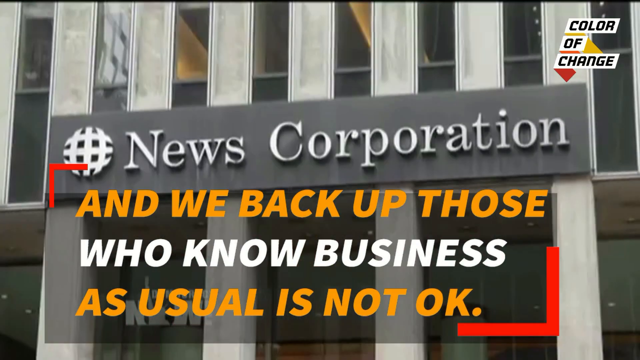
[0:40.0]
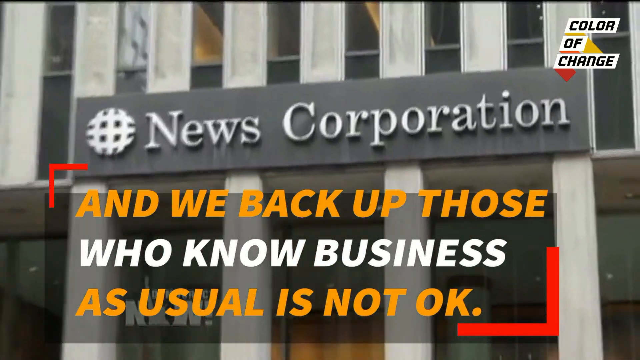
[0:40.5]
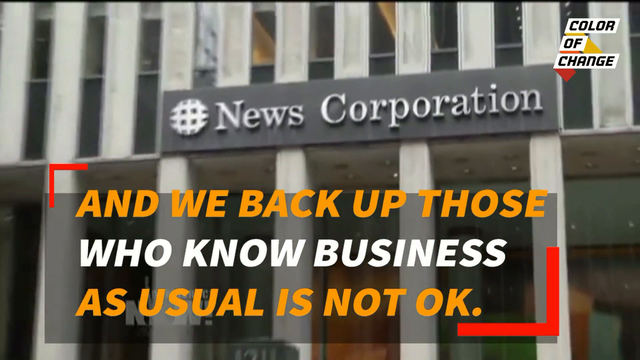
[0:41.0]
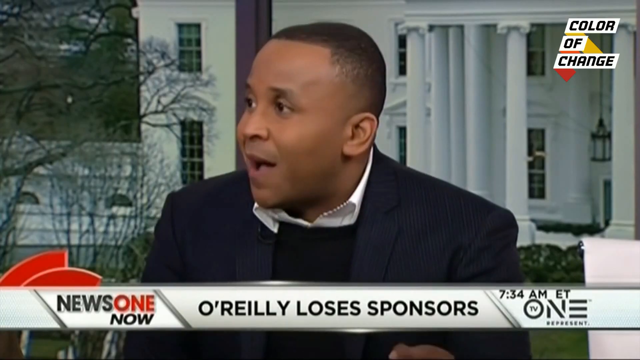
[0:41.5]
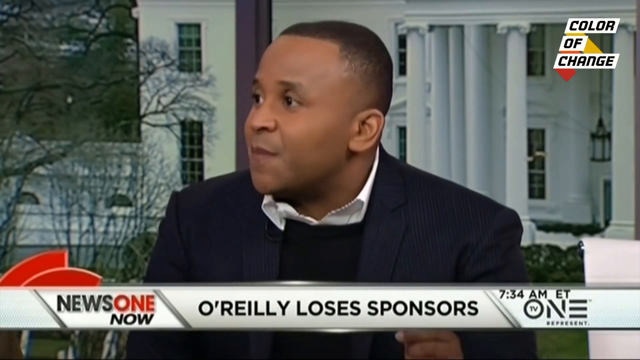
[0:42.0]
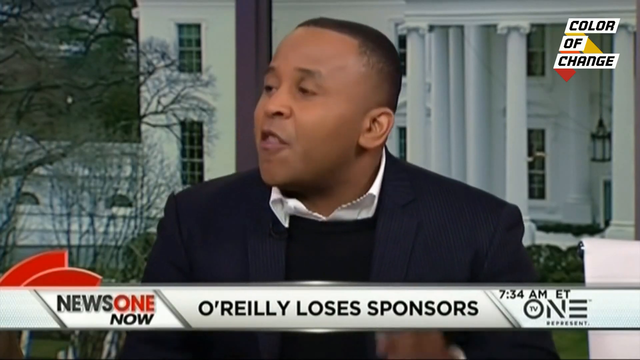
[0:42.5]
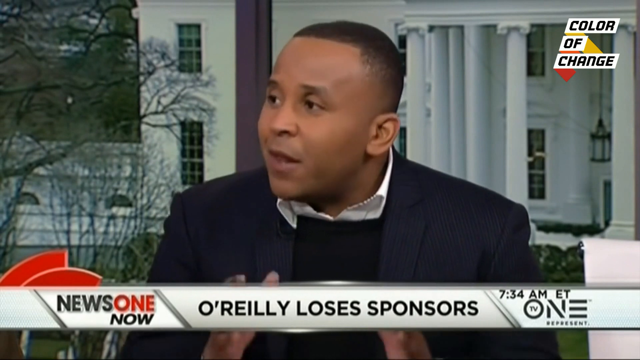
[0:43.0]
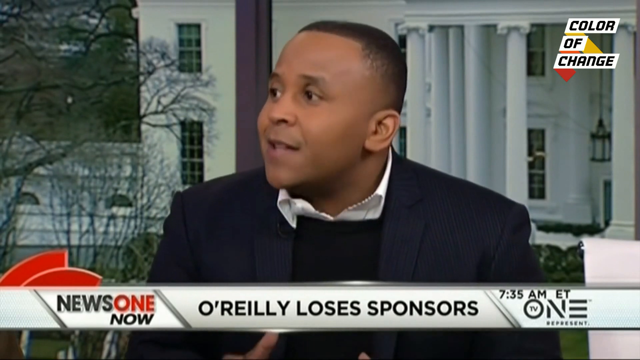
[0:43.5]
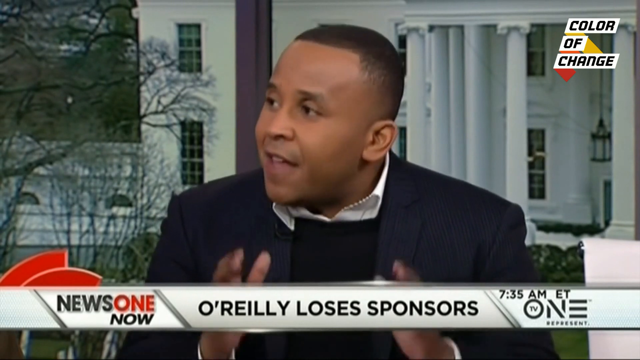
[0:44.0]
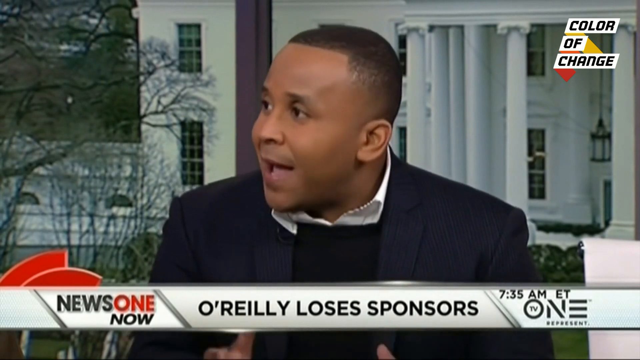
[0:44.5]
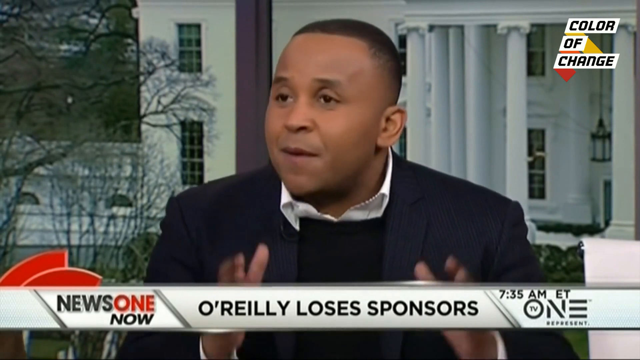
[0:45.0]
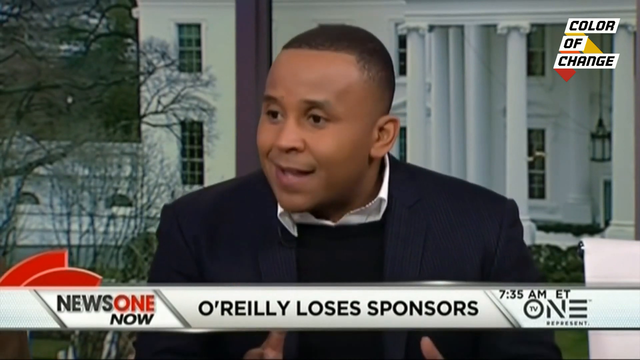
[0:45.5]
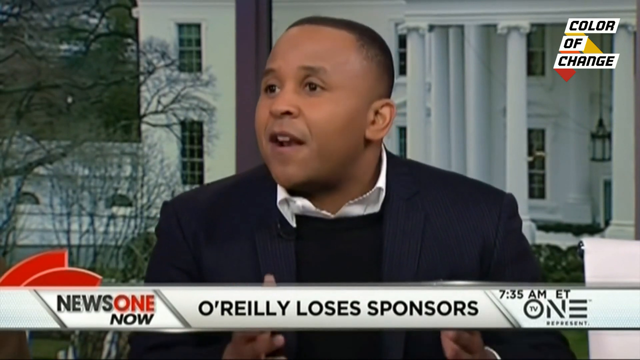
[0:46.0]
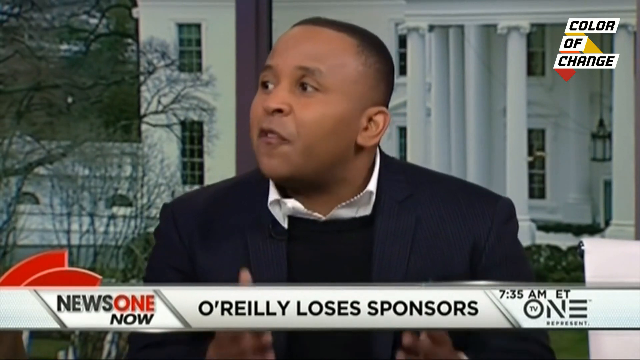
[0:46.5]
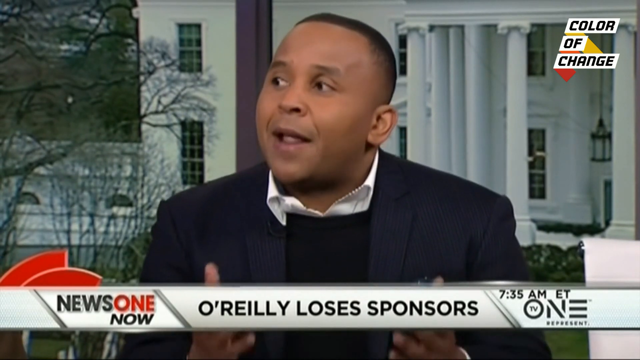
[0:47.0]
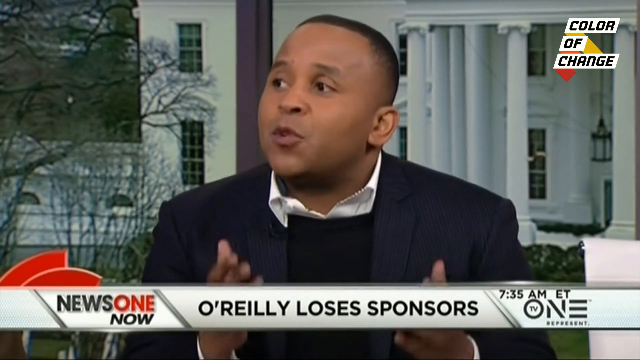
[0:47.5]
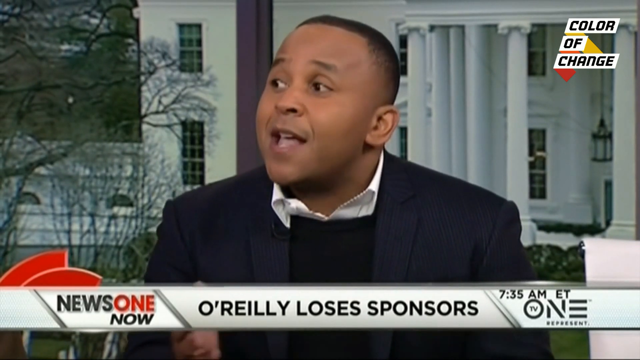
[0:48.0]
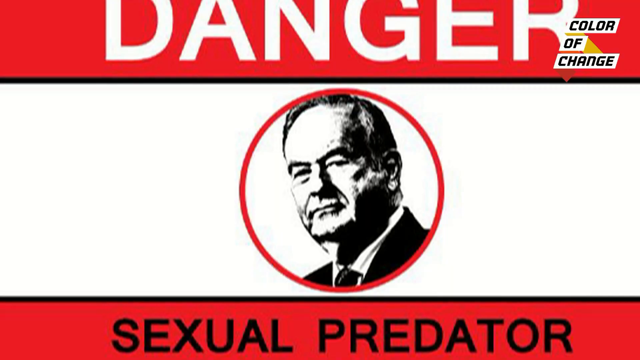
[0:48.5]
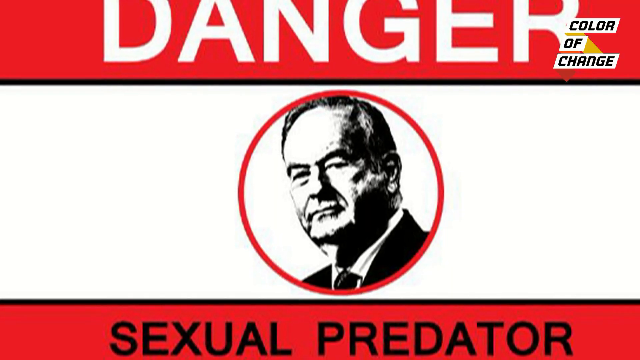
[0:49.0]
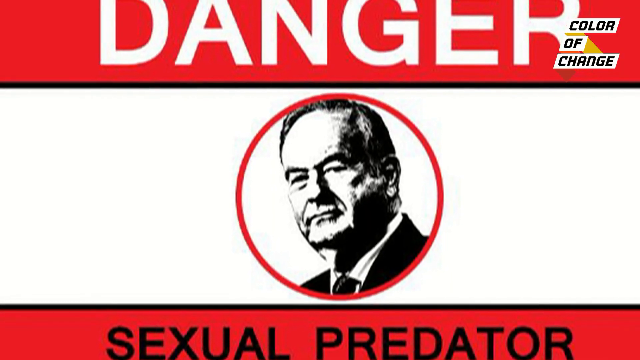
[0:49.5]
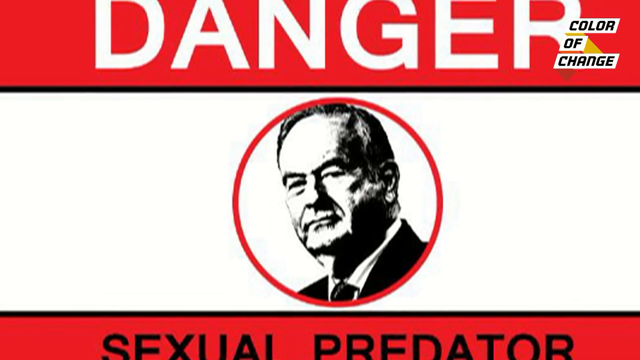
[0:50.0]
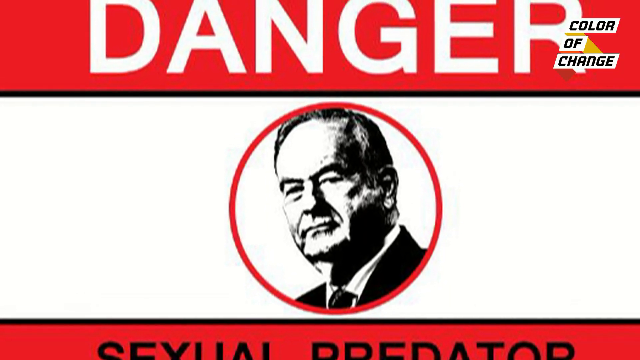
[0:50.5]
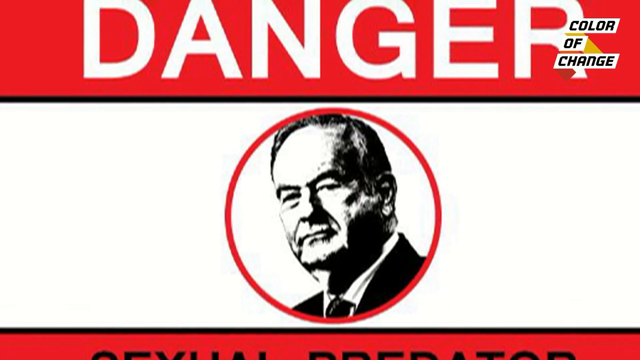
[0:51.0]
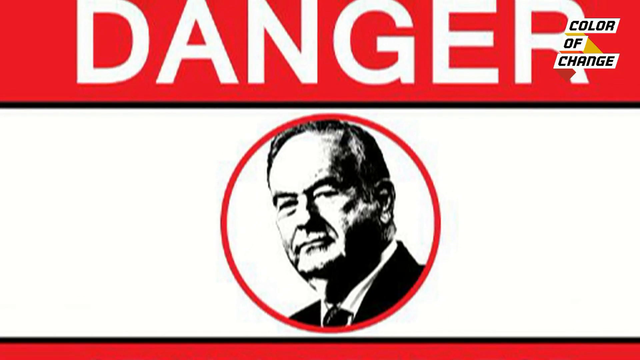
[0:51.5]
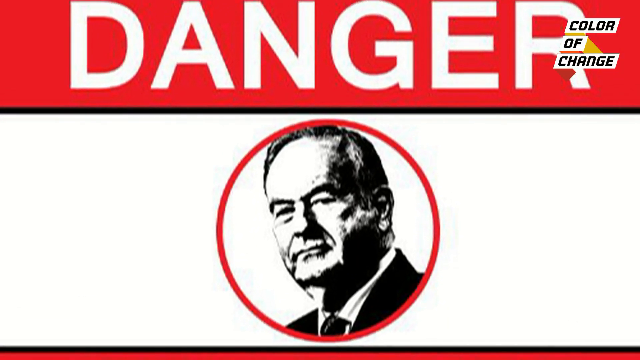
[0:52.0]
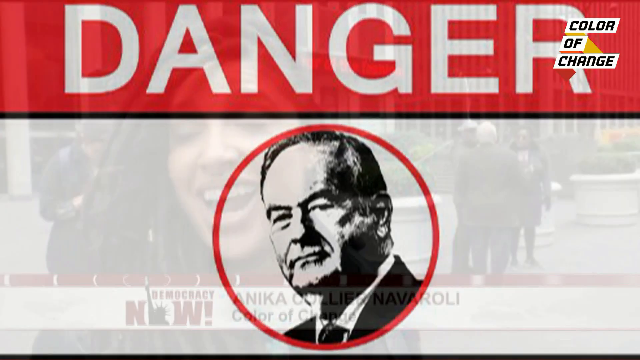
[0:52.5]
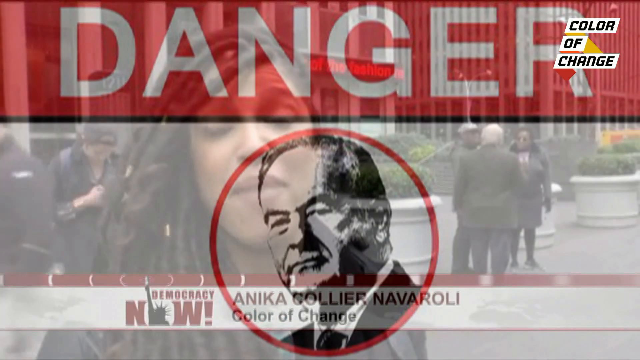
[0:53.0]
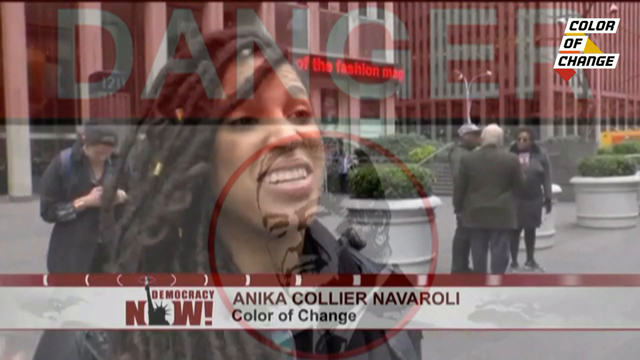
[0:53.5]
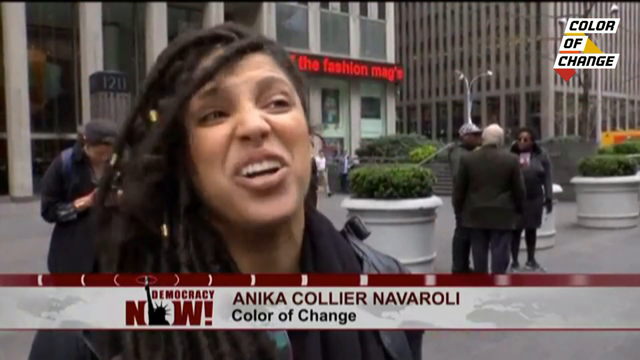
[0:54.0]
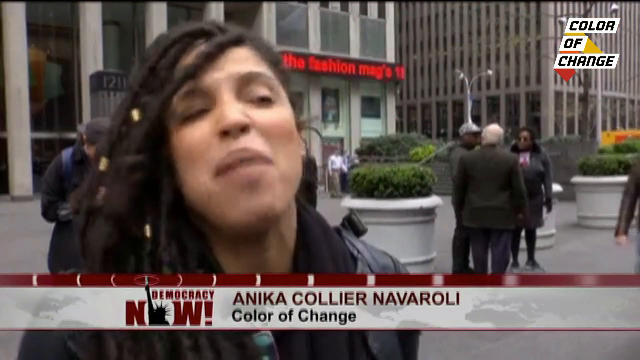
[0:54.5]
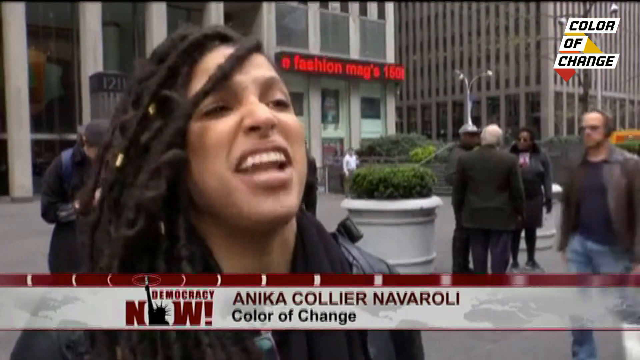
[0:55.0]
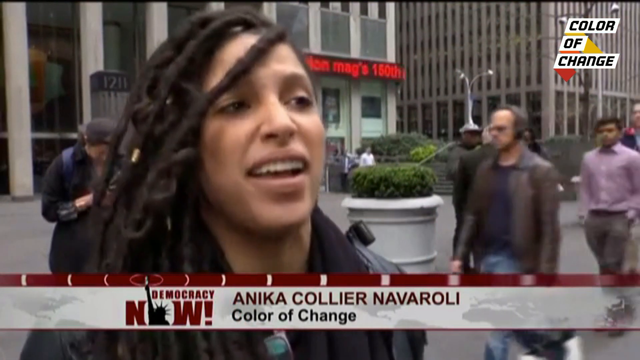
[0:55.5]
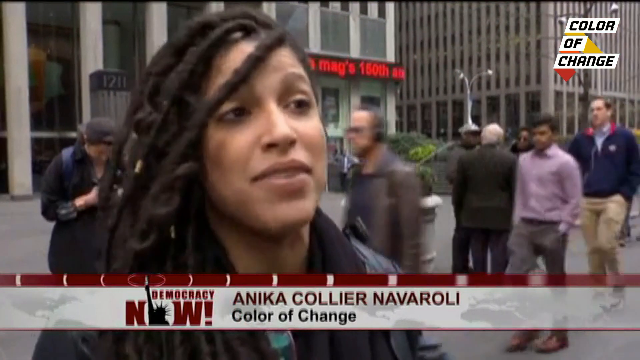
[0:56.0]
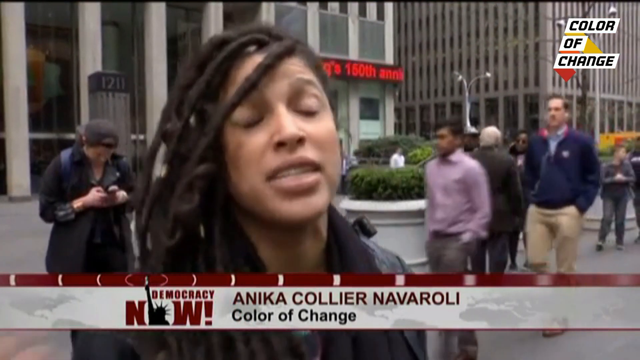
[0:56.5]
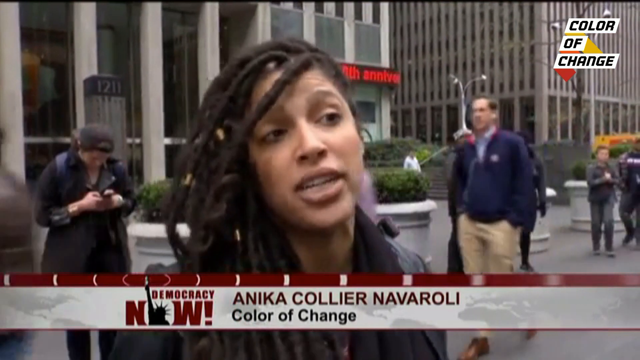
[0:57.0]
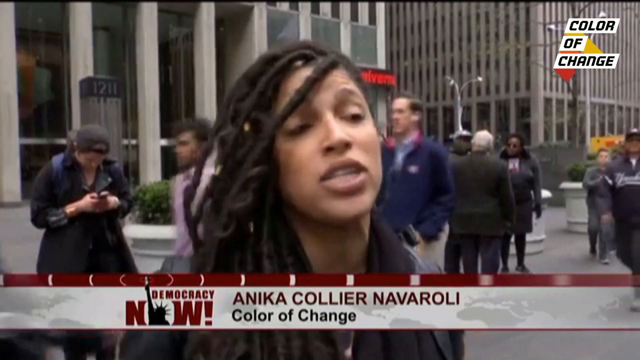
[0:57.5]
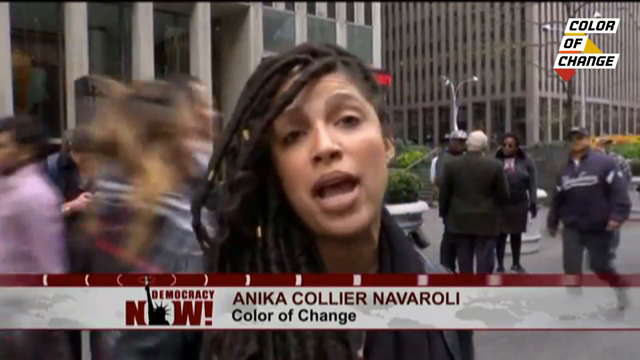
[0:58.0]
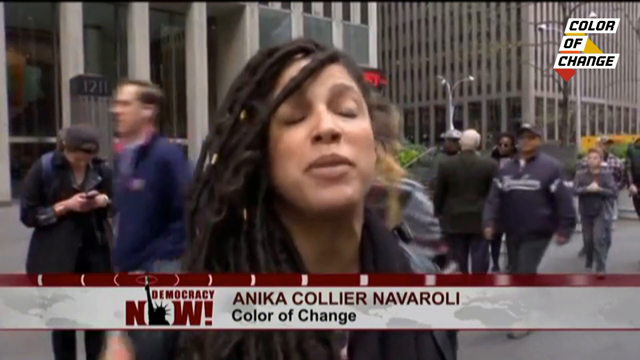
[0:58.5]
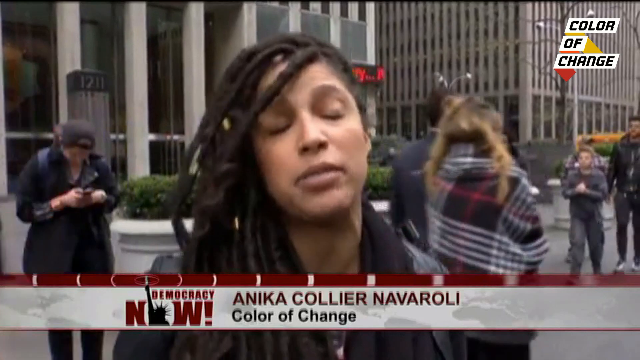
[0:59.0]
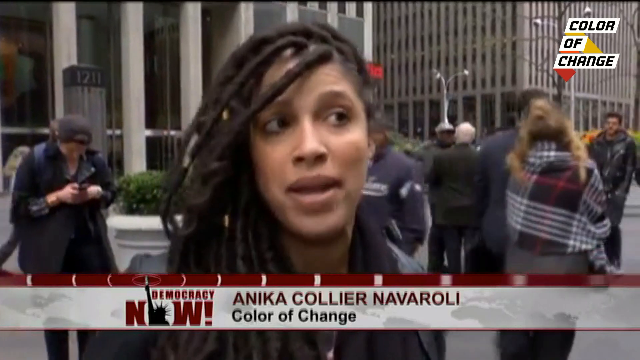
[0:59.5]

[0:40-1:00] The headquarters of News Corporation, the Rupert Murdoch business that owns Fox News, is shown. An African-American commentator talks about O'Reilly losing his sponsors on a breakfast TV show at 7.35am. A graphic follows with "Danger" at the top, a photo of Bill O'Reilly's face beneath it, and "sexual predator" underneath. Next comes one of the Colour of Change activists, Anika Collier Navarroli, who appears to be mixed race; she has dreadlocks and a huge smile on her face.